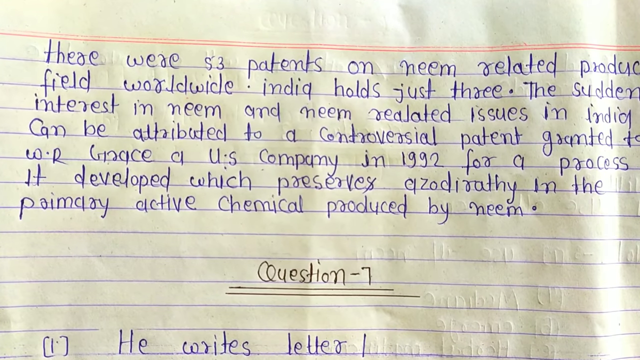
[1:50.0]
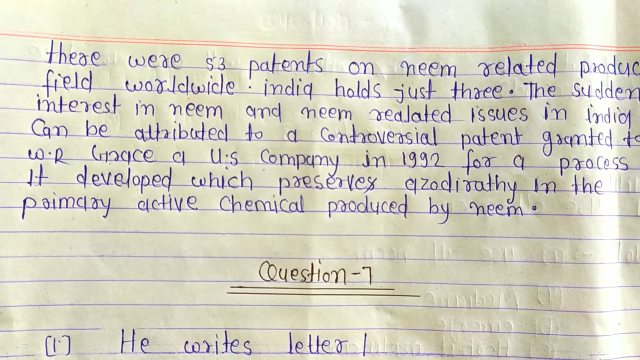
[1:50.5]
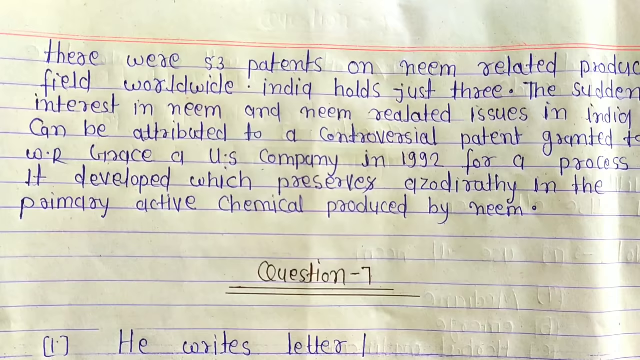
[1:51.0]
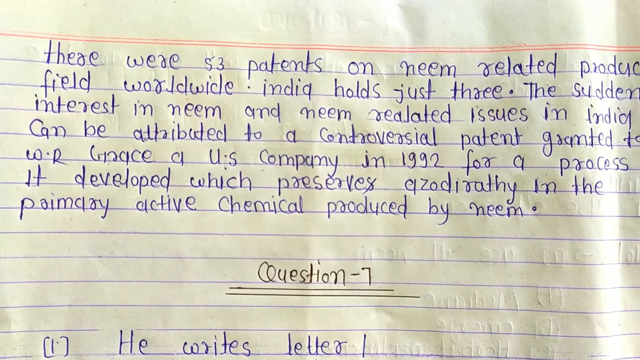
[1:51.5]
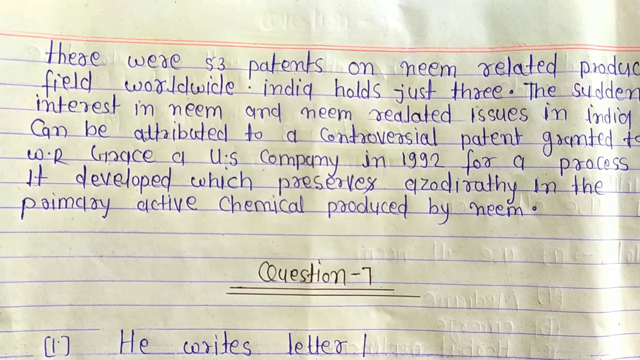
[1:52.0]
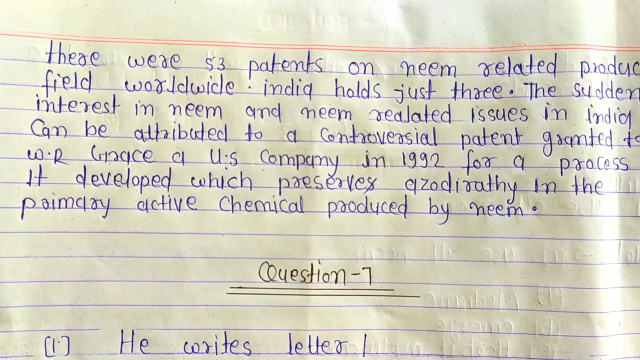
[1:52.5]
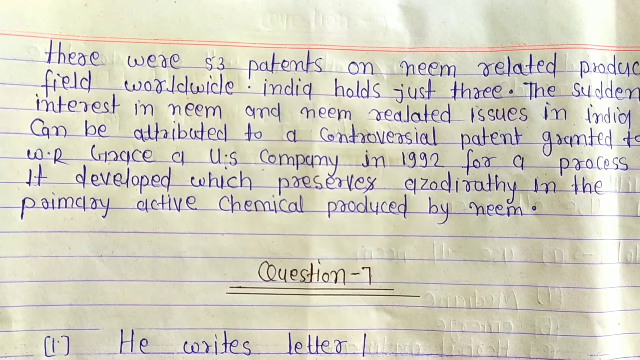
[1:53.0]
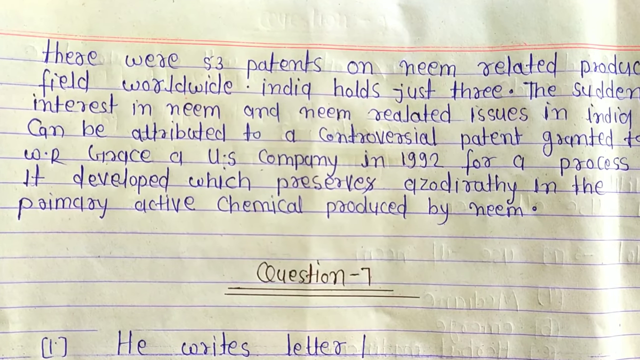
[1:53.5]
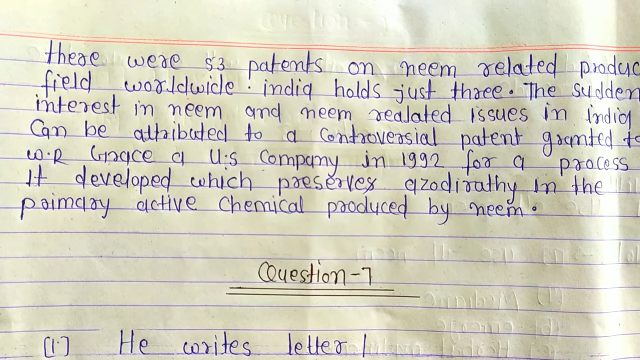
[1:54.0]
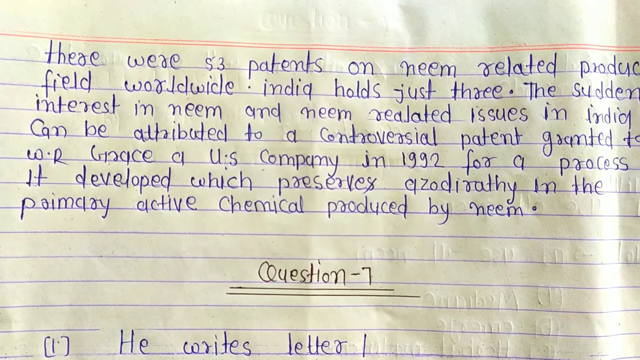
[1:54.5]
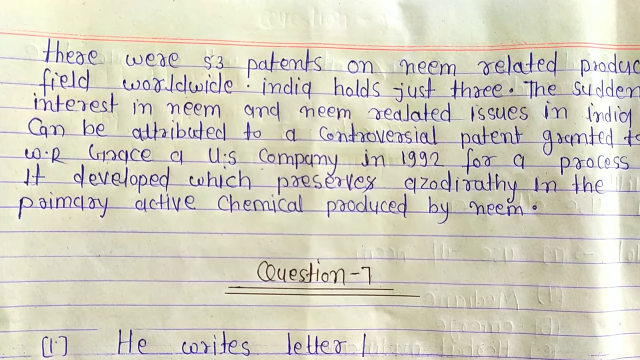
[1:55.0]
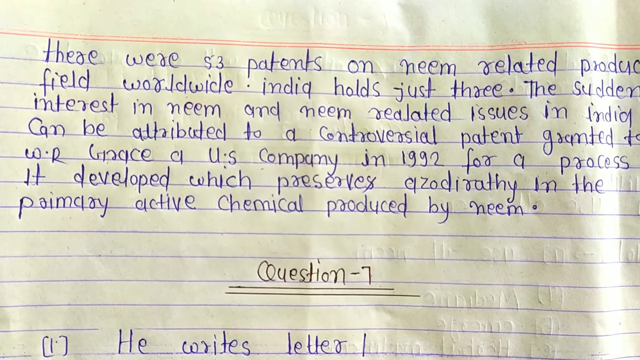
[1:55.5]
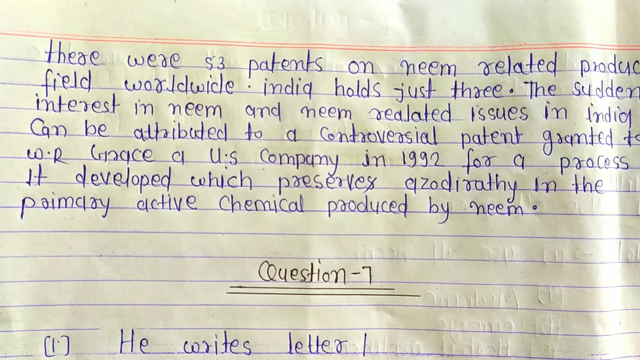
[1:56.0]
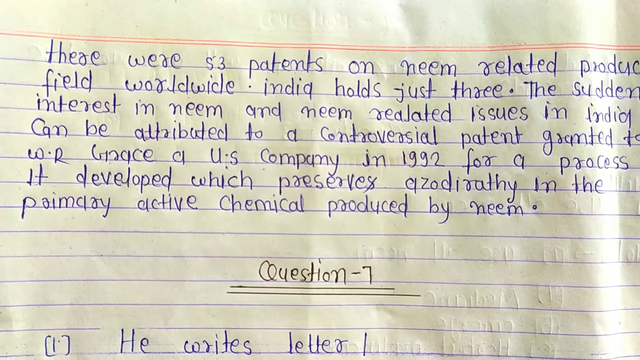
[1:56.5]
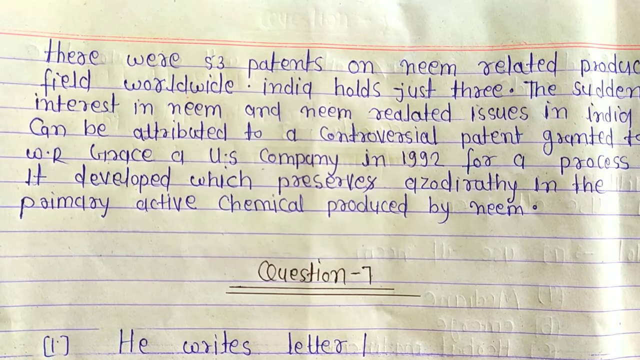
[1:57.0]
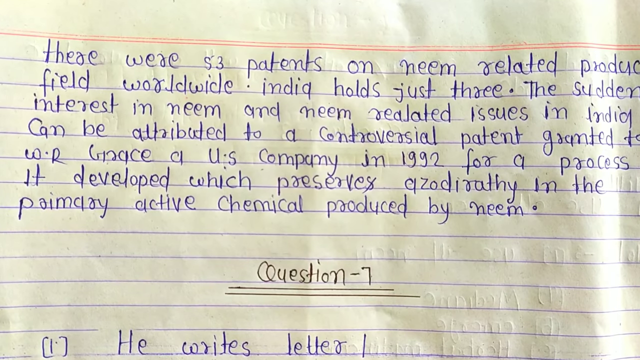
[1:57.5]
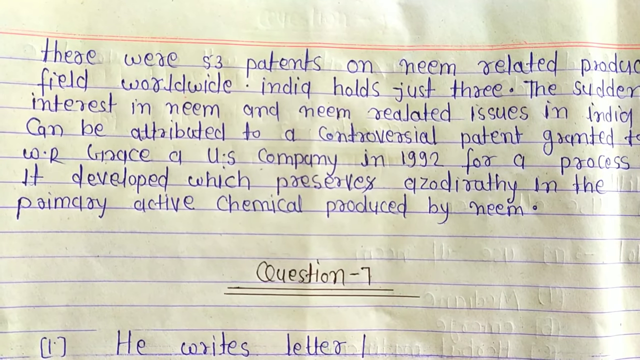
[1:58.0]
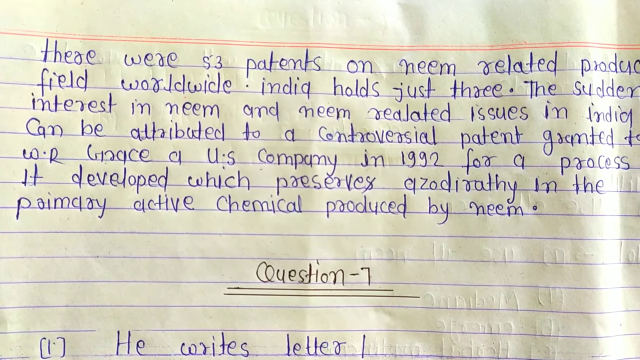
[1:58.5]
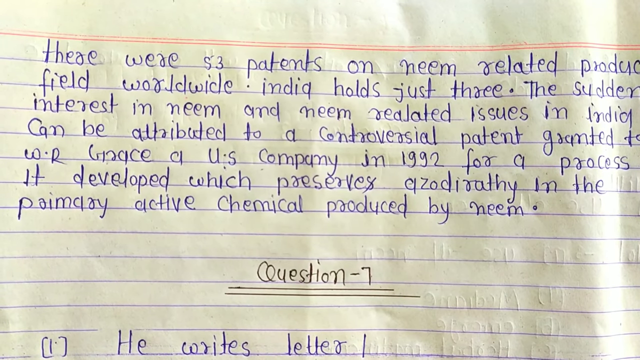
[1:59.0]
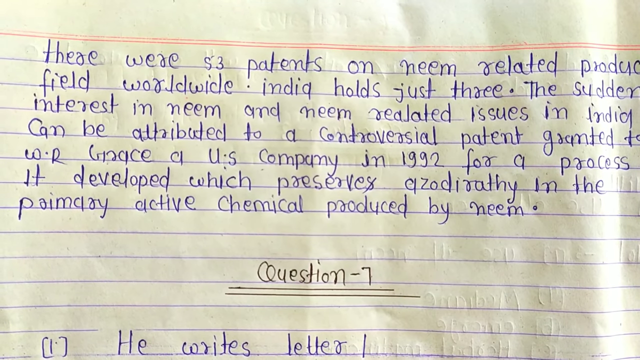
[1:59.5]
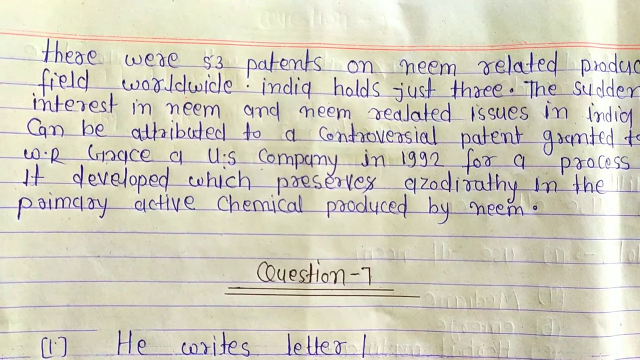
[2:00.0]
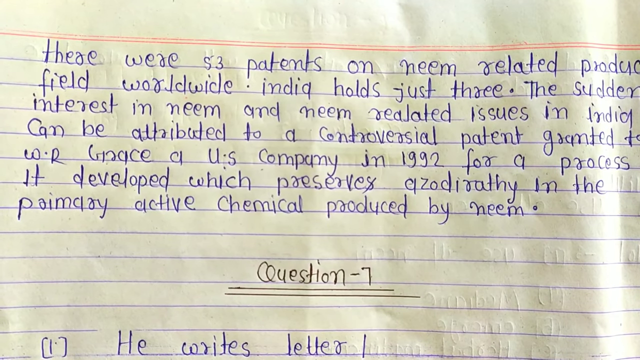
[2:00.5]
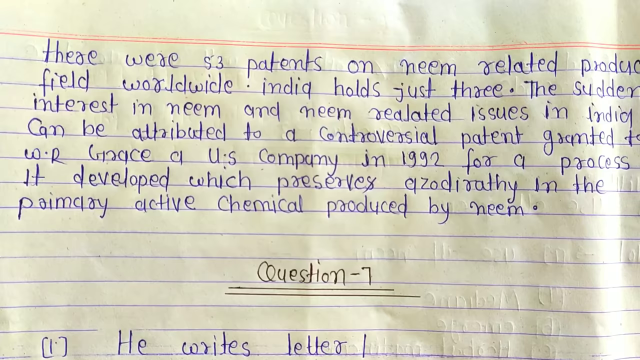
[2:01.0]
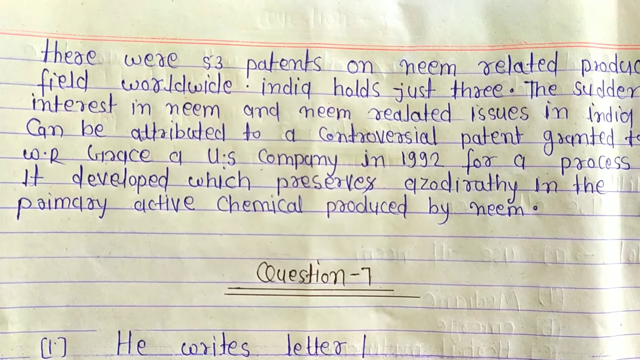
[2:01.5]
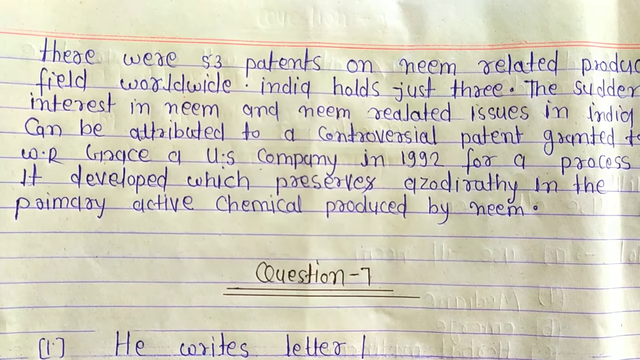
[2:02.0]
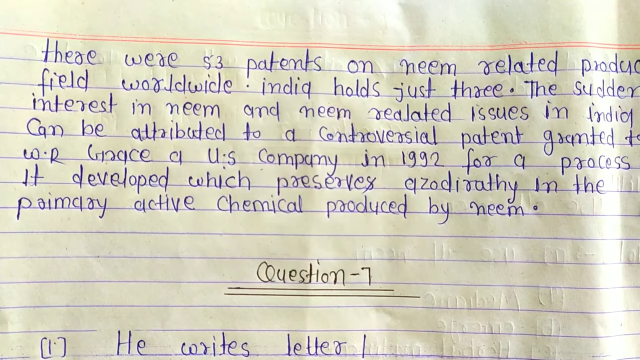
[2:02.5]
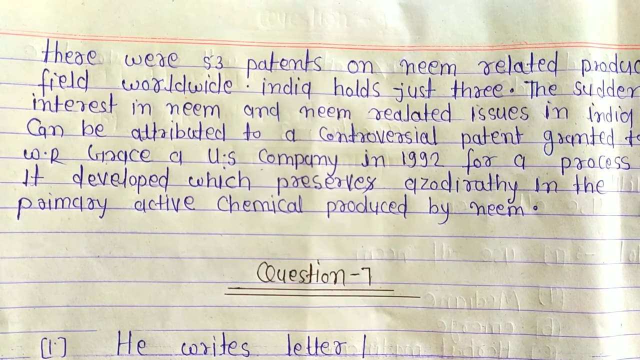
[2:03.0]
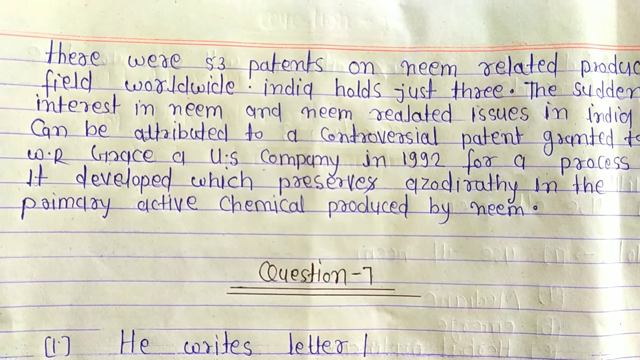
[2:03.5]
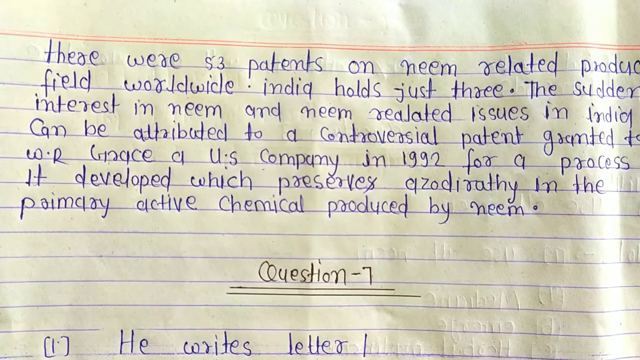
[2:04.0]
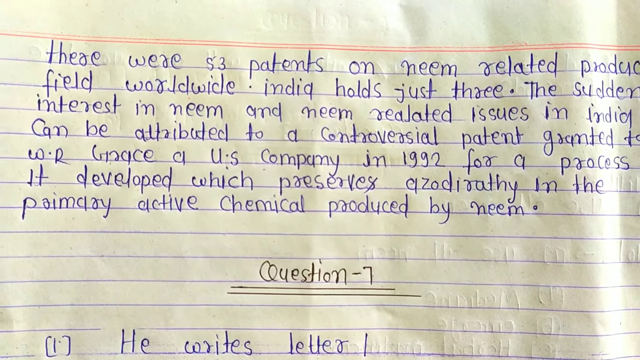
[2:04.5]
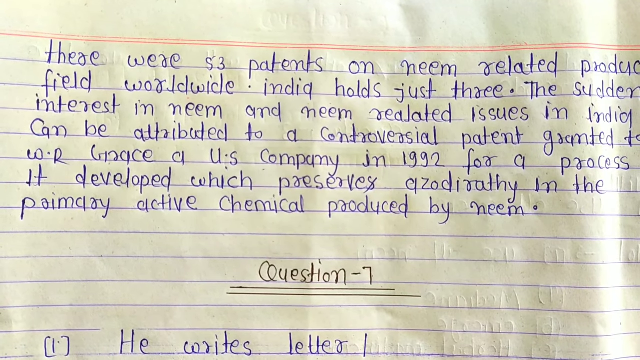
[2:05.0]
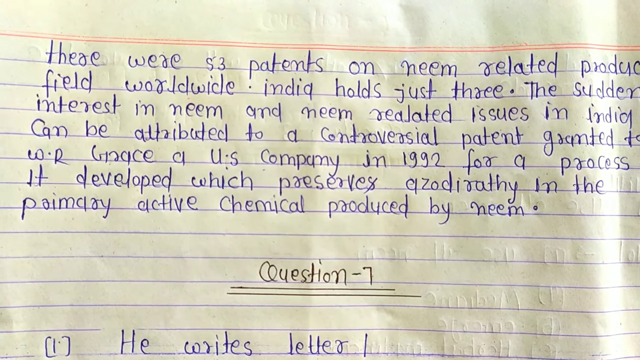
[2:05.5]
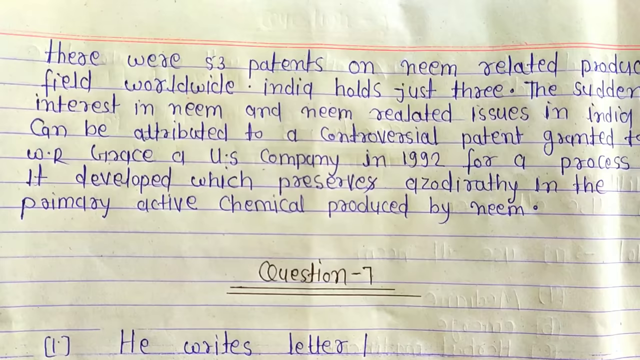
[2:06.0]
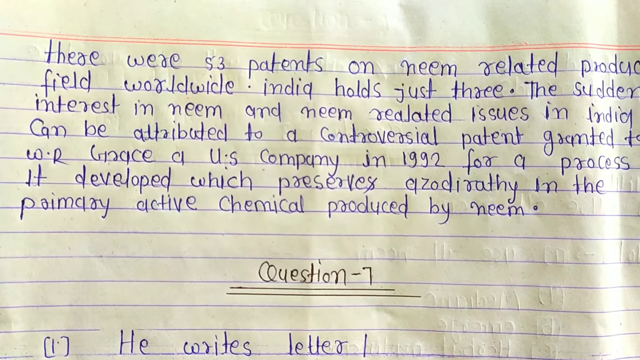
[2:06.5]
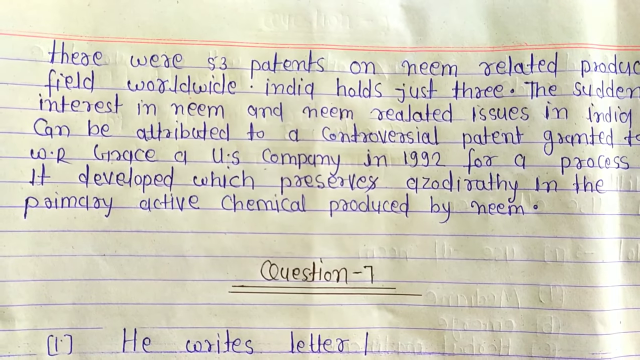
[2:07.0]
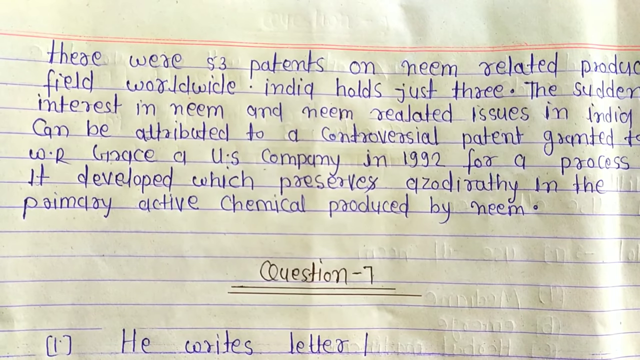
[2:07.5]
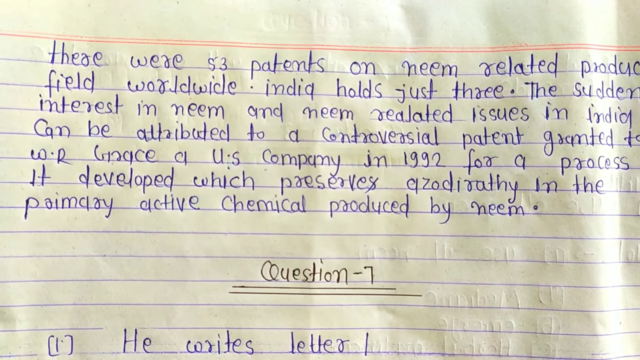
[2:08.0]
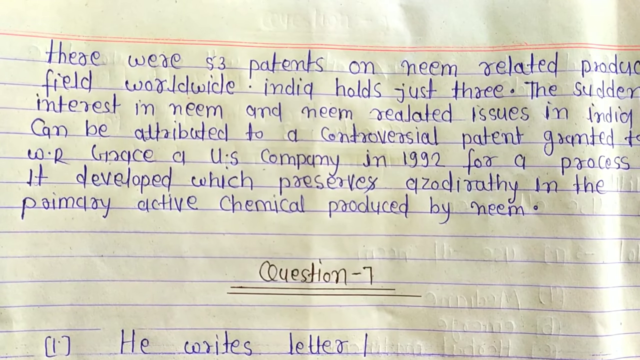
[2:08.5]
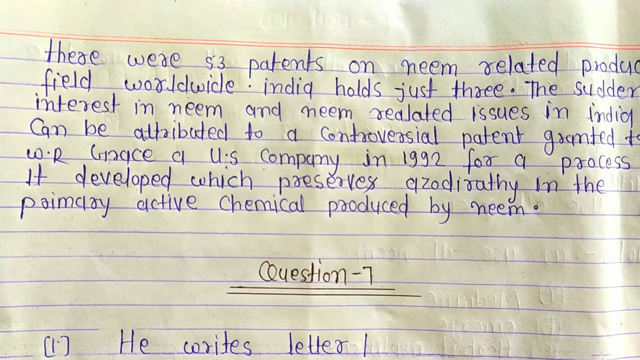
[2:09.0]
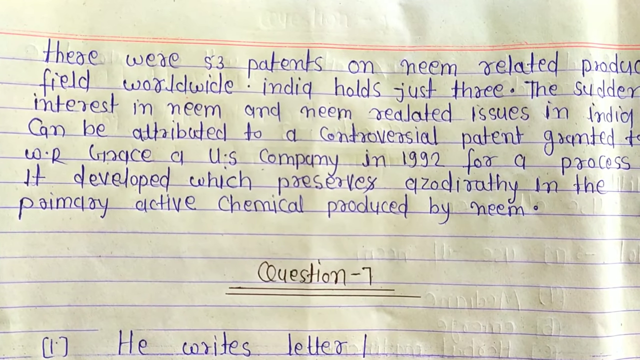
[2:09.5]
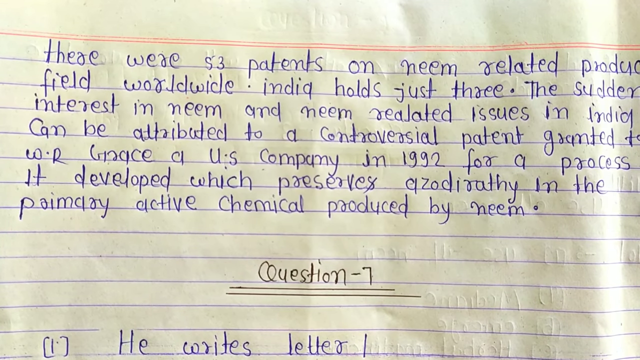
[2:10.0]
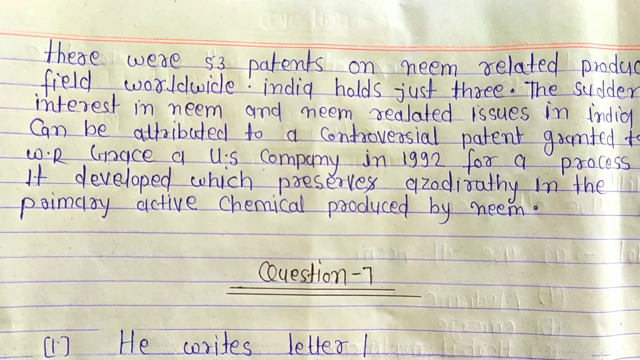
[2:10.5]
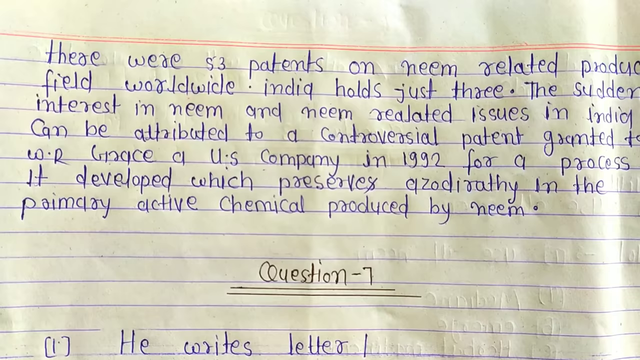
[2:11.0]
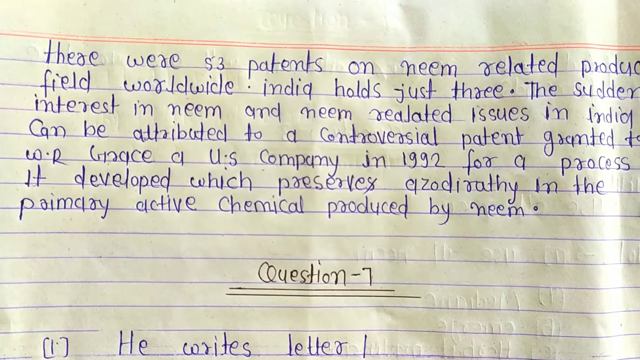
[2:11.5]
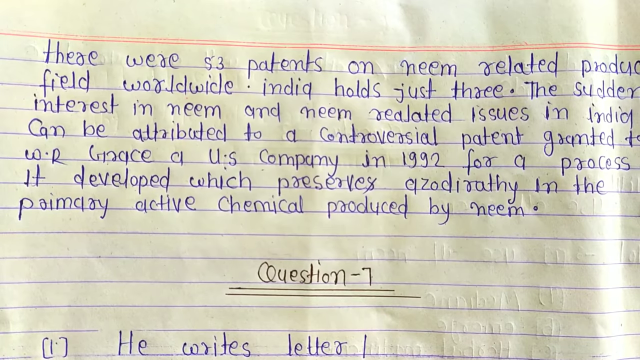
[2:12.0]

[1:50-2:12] Several lines of blue writing concern patents in India and neem-related issues. The writing reads "there were 53 patents on neem related products" and "worldwide. india holds just three", with "india" written with a lowercase i. It continues "the sudden interest in neem and neem related issues in India can be attributed to a controversial patent granted to W.R. Grace, a U.S. company in 1992 for a process it developed which preserves", followed by a hard-to-read word and "active chemical produced by neem". A few lines down, "question seven" is written in black and underlined twice.